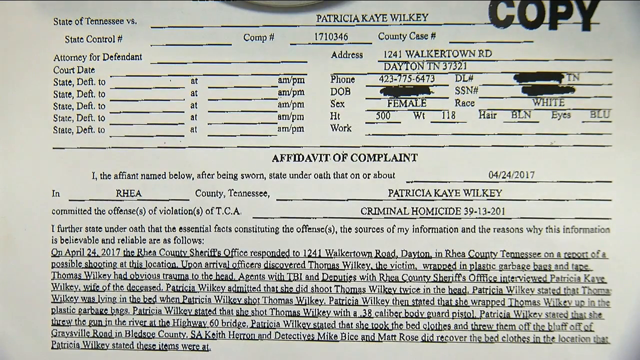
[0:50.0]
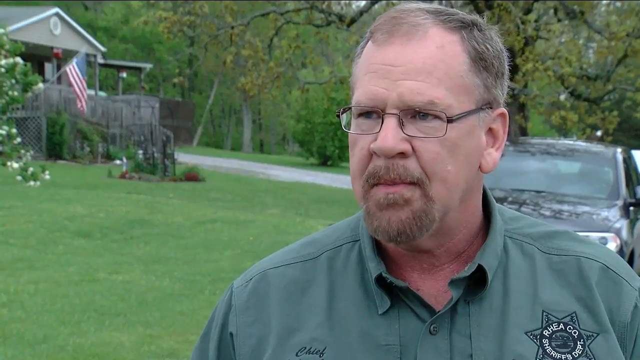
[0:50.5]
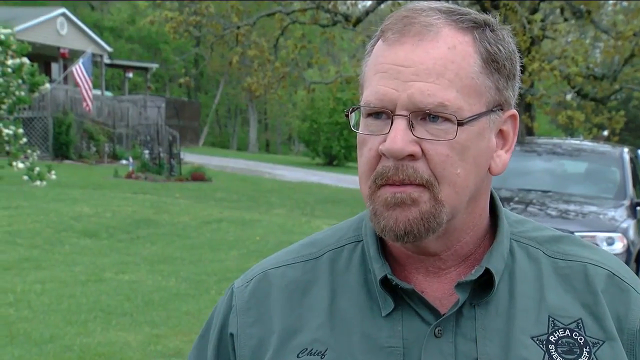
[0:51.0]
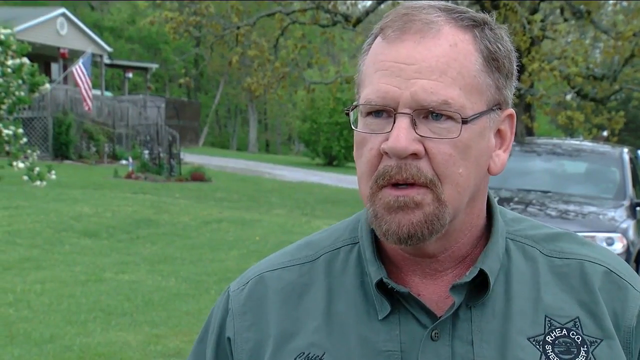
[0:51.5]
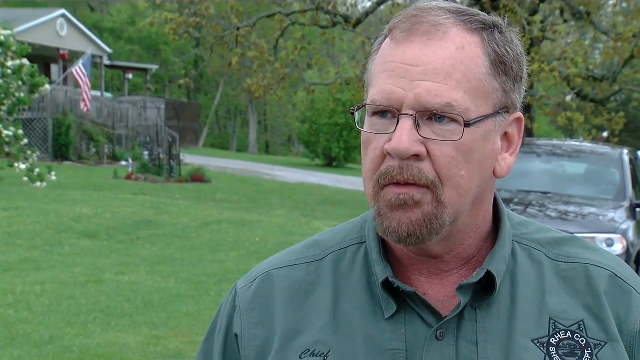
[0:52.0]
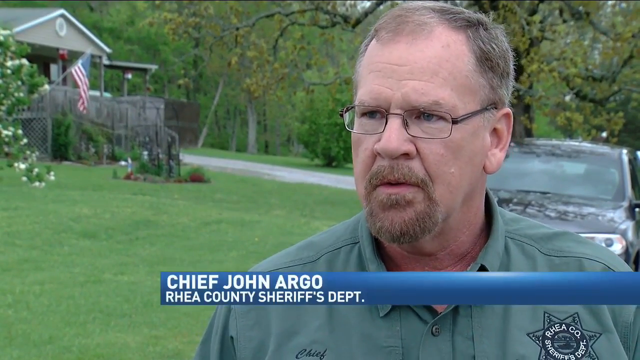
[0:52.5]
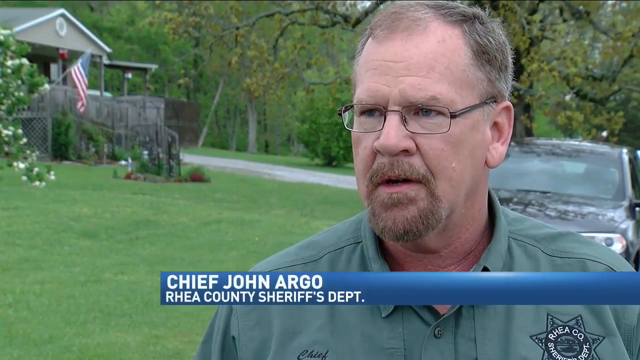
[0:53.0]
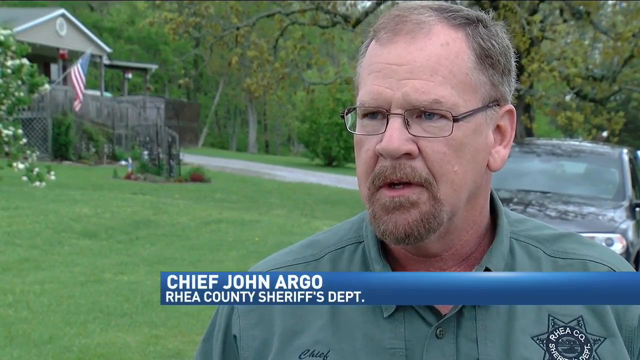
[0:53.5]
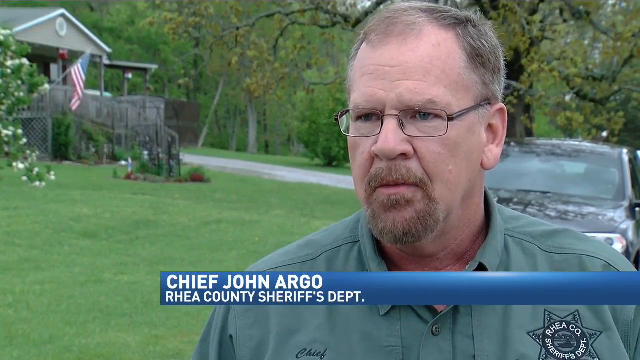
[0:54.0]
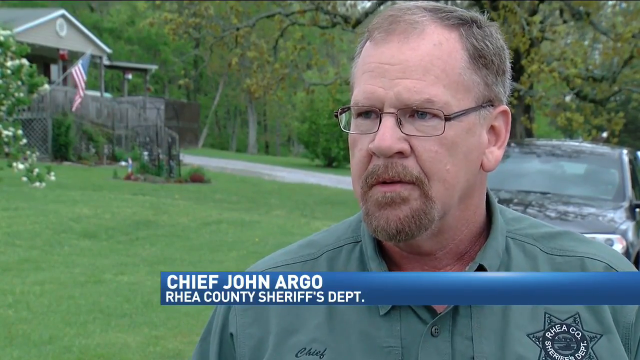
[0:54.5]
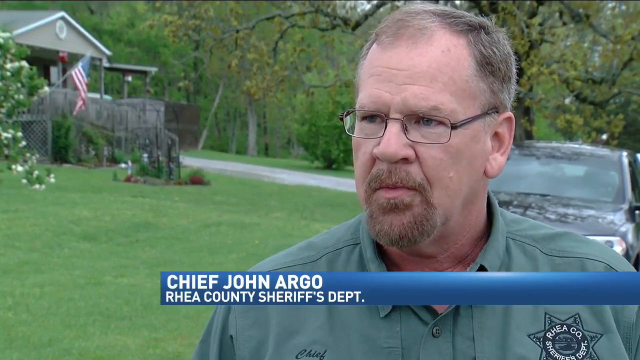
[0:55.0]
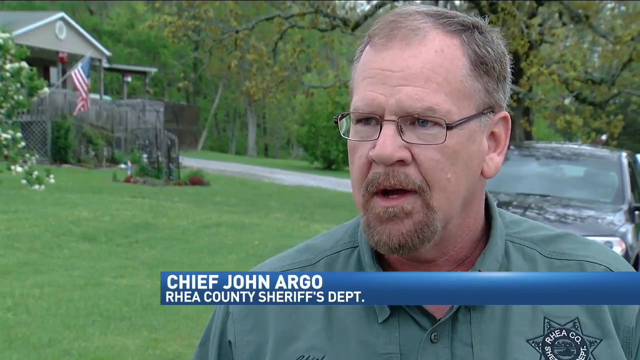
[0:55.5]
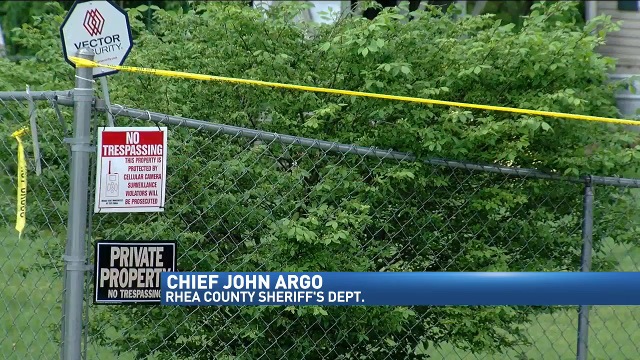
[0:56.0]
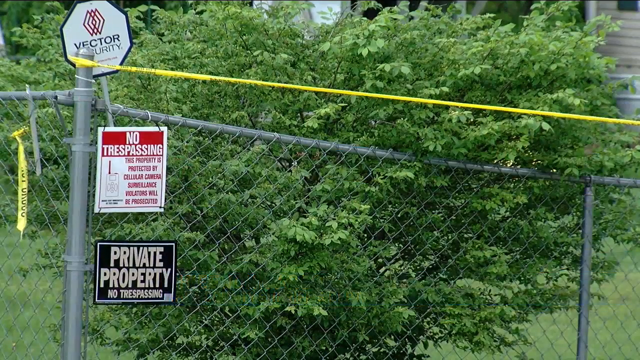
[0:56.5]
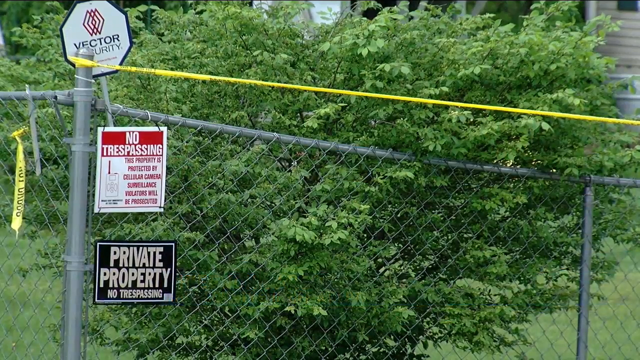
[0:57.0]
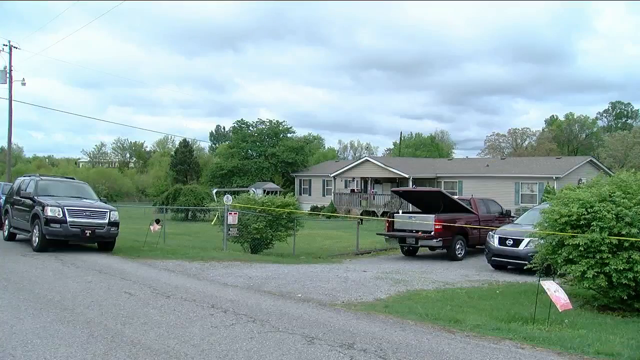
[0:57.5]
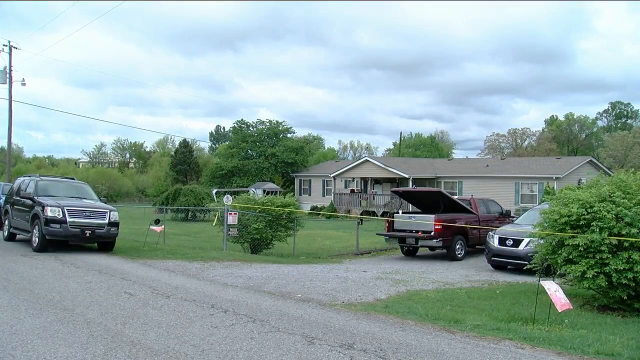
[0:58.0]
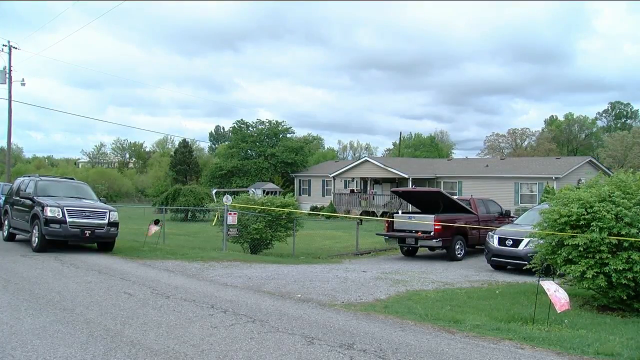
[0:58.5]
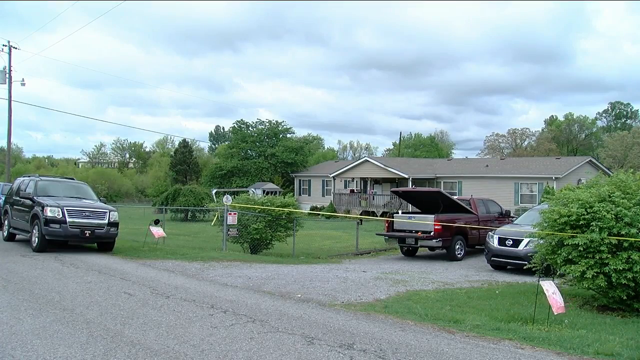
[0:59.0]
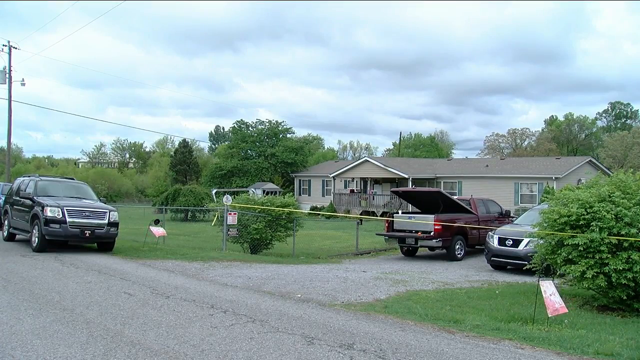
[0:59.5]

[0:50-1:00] The document is still on screen. A man in thin-framed glasses with a green shirt and blondish grey hair is talking and looks very serious. To his left is a field that appears to be the front yard of a house, and the house is visible in the background with an American flag. A black car is to his right. The scene switches to the fence and then quickly to the one-floor building seen earlier. Two cars are parked on the yard behind the yellow tape: a red truck with the roof of its trunk opened, and a greyish Nissan car to the right of it.